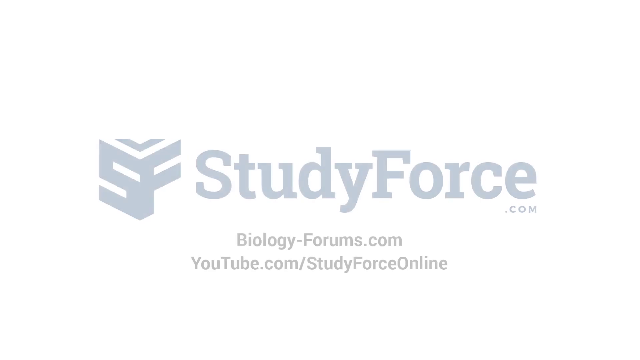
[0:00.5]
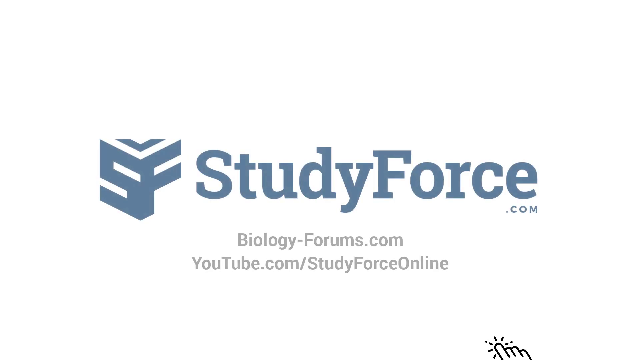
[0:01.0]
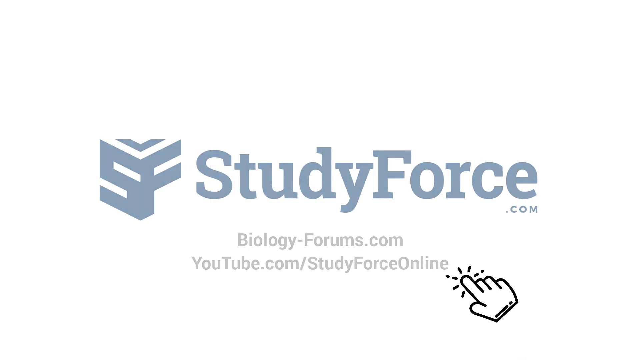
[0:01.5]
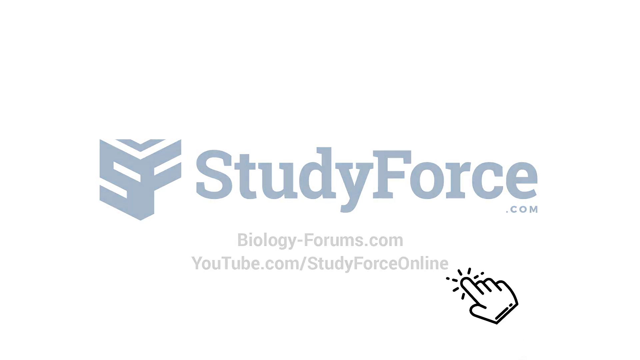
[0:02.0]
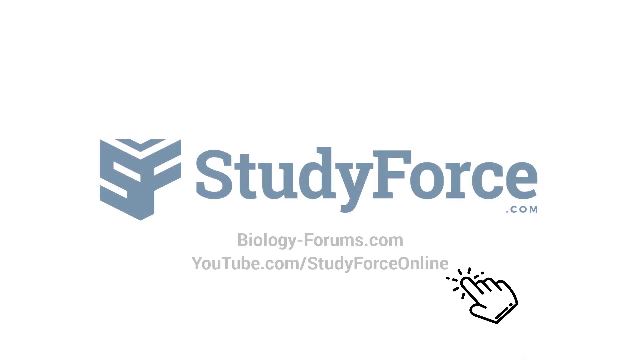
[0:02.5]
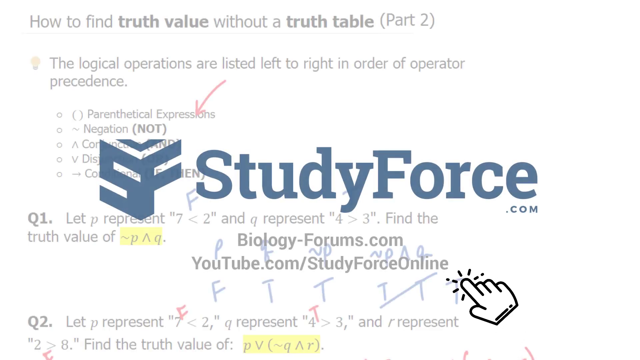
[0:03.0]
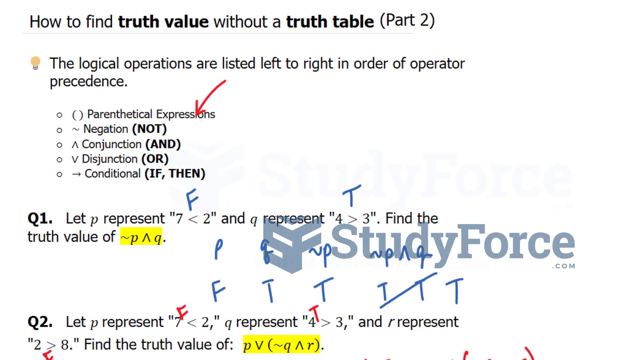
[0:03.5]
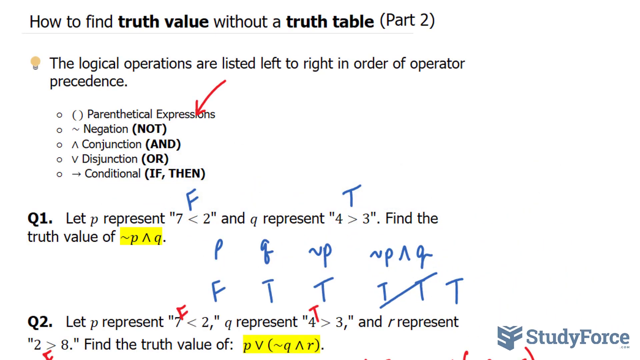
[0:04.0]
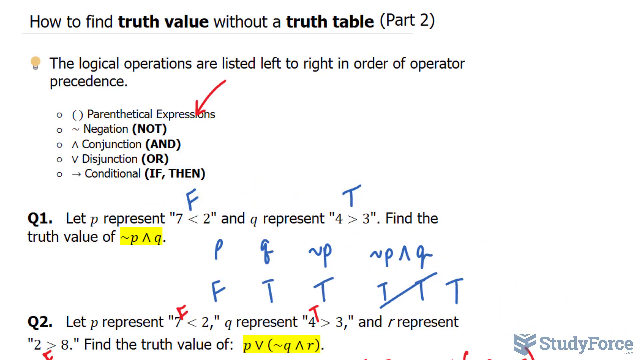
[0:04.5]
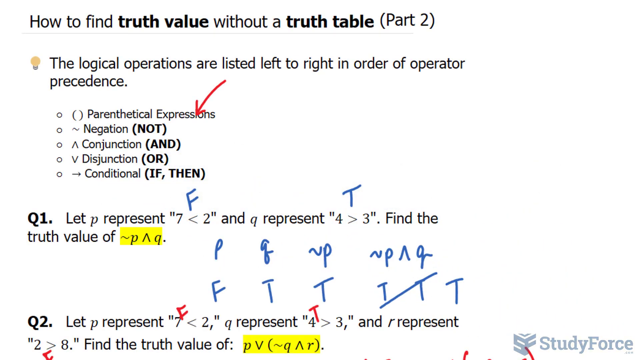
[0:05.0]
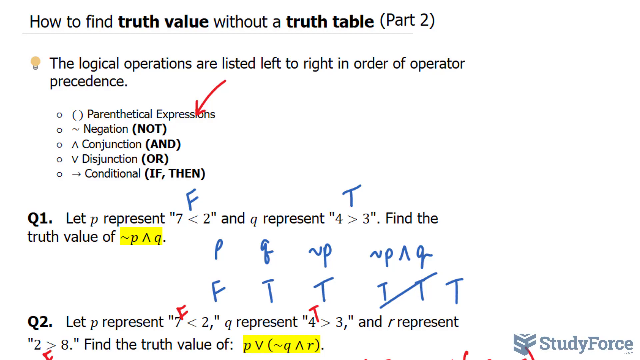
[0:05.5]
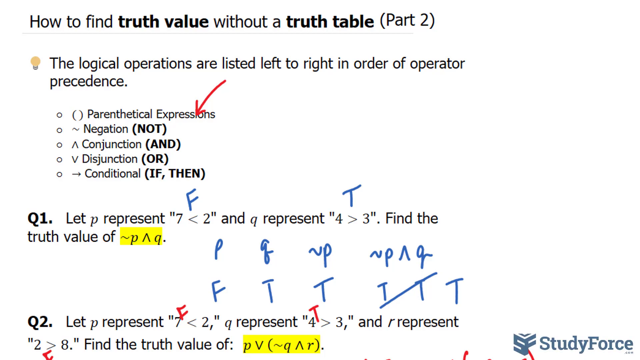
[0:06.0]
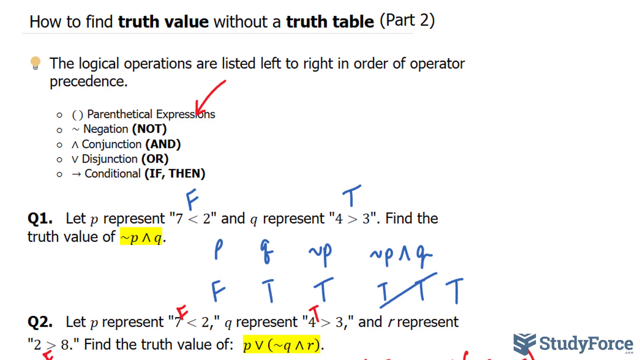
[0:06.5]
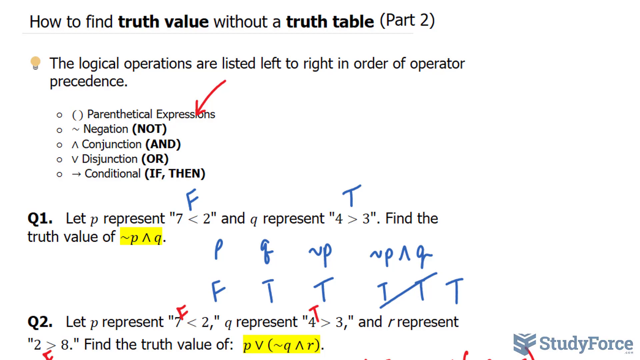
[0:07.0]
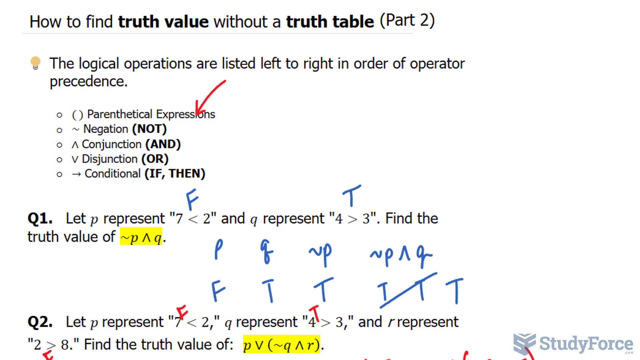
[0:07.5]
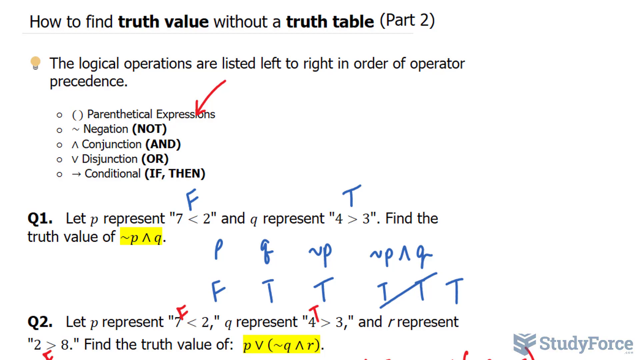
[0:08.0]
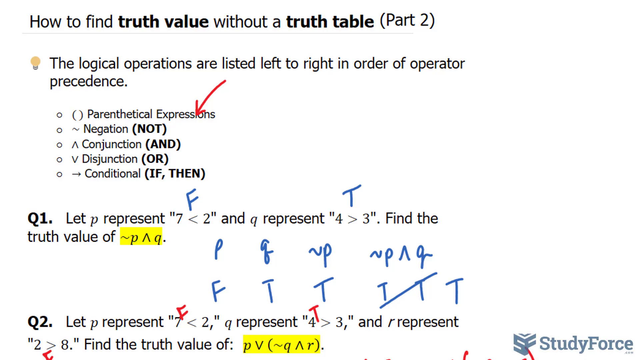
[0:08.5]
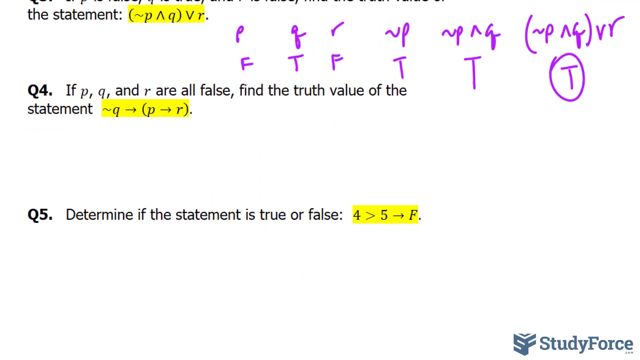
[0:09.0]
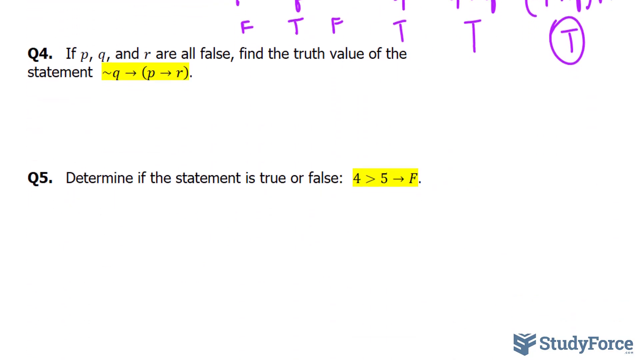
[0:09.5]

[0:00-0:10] Blue writing appears in the center of the frame on a white background, reading "studyforce.com". To the left of this writing a blue logo appears, also on a white background. A few seconds in, the writing and the logo move to the lower right corner of the screen, revealing black writing justified to the left, with some words highlighted in a heavier font. The cursor scrolls the page, moving it quickly down, and red letters and other blue letters can be seen inside the web page.